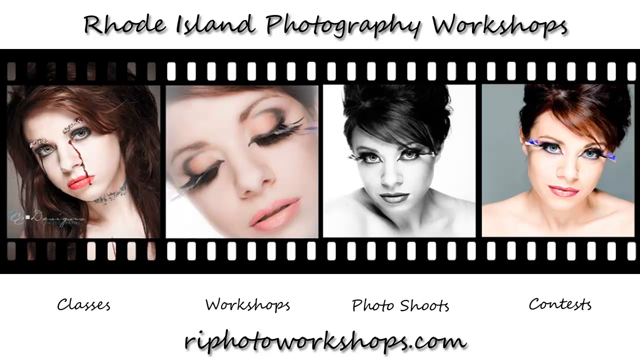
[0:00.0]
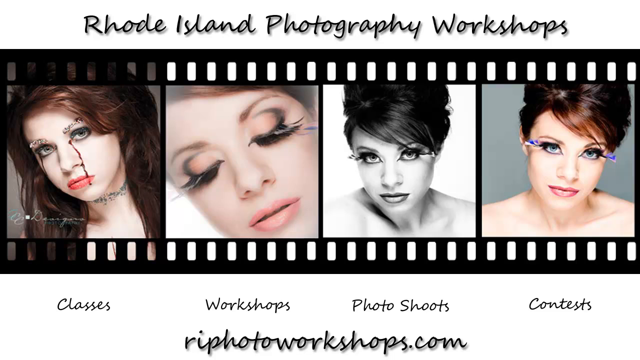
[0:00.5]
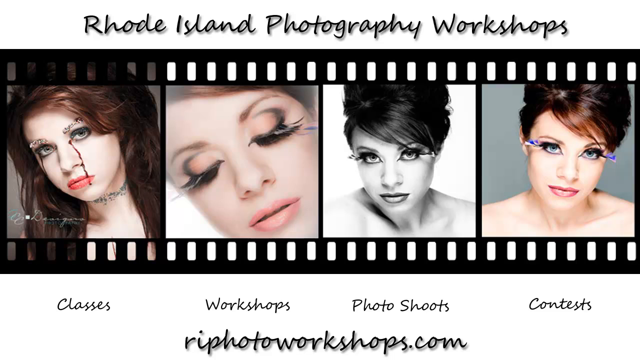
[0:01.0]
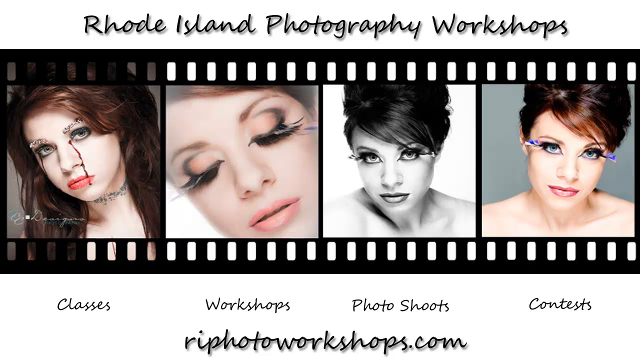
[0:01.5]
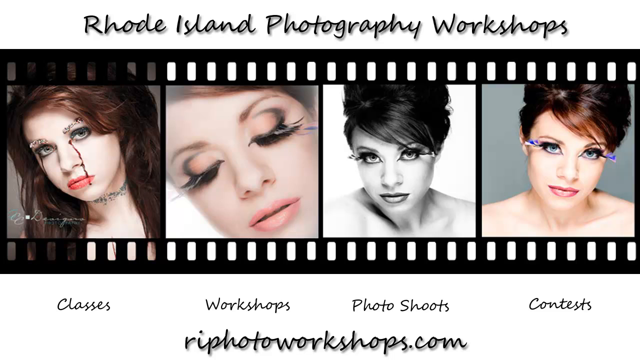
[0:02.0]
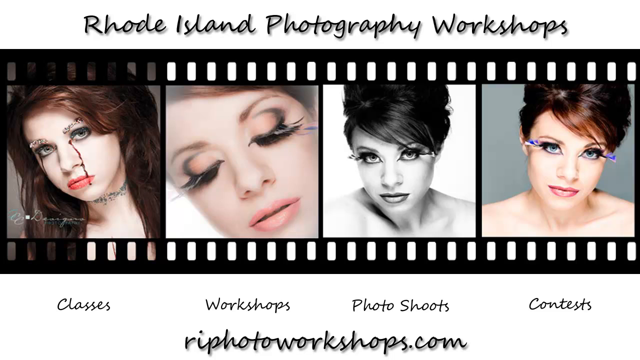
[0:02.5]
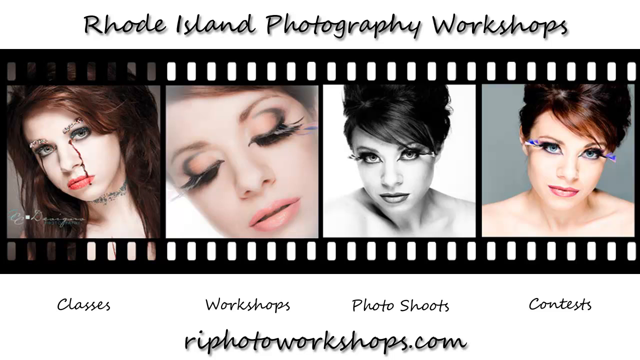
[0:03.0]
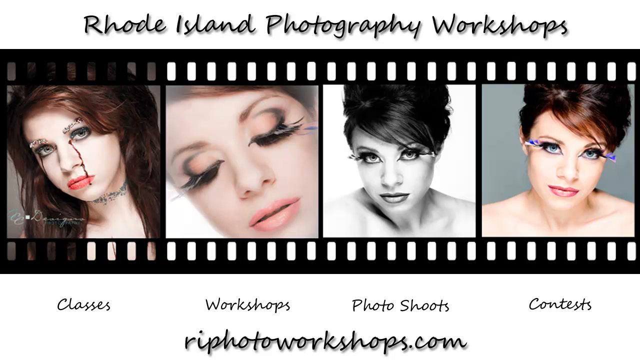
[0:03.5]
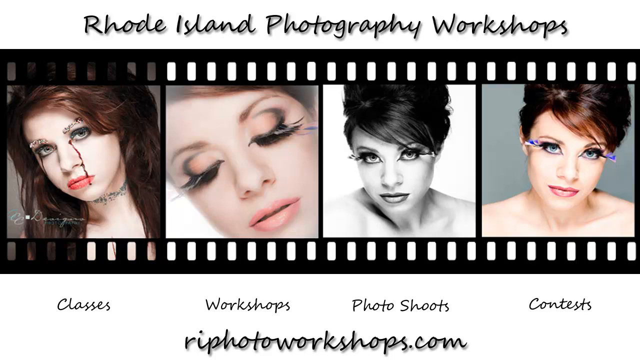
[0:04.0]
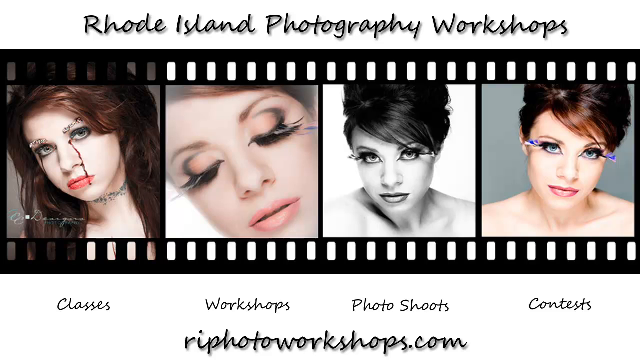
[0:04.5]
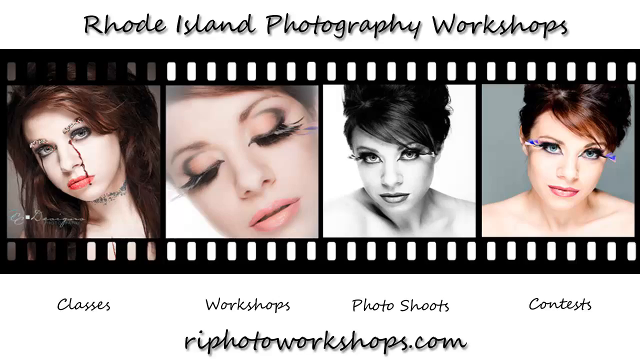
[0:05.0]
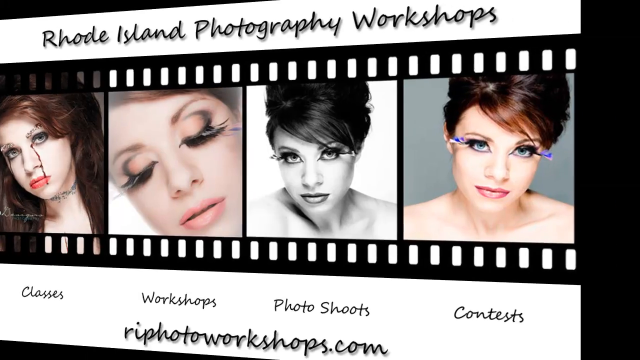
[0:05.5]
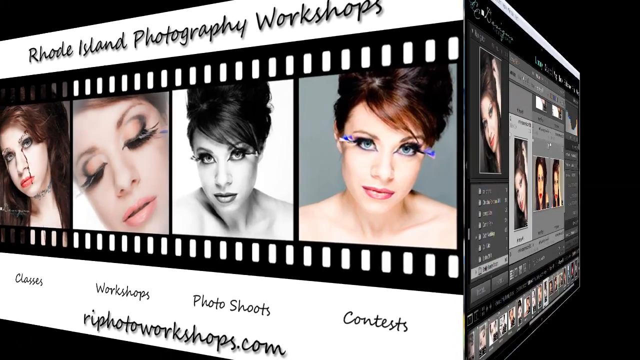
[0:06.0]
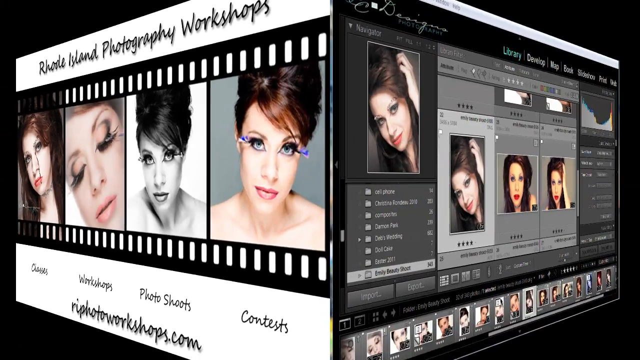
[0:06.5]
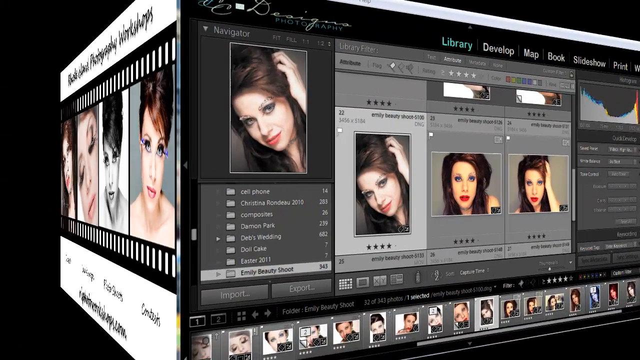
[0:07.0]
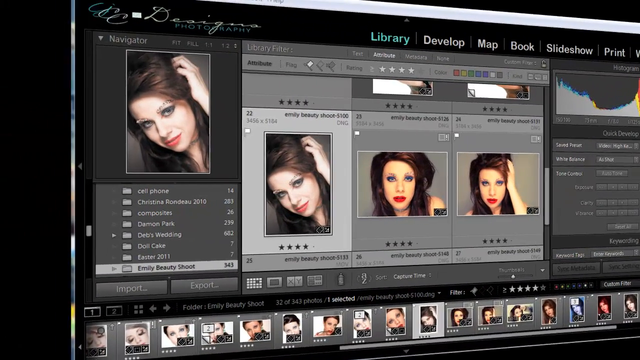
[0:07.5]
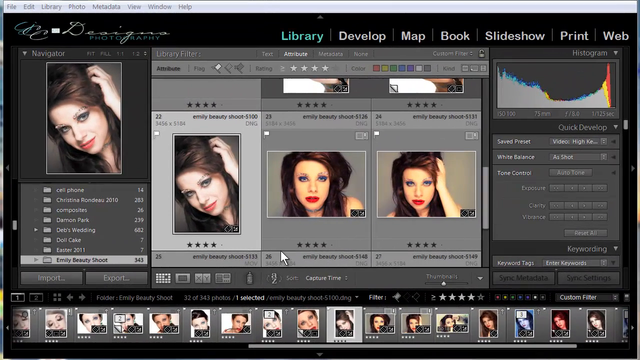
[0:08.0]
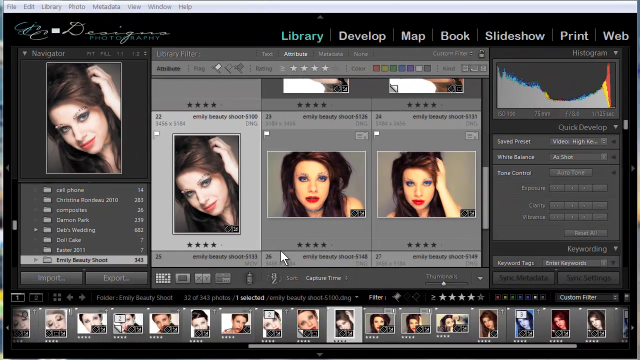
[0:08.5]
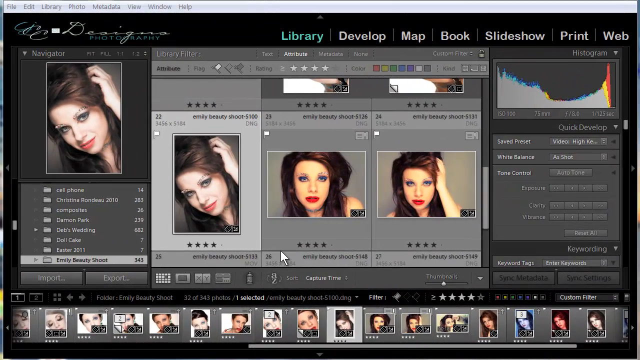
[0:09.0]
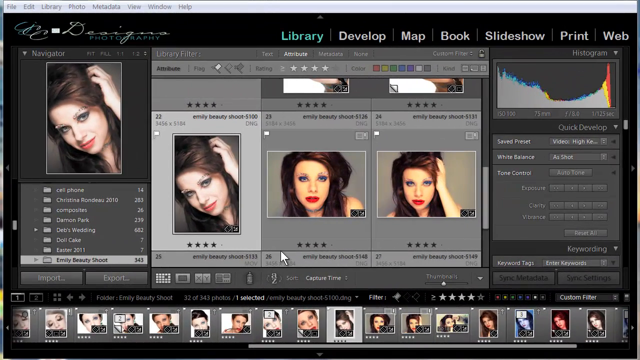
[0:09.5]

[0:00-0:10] The video opens with what appears to be an advertisement for modeling of some sort, listing classes, workshops, photo shoots and contests, with a link to a website at the bottom. A film strip runs along the top and bottom, and the text reads "Rhode Island photography workshops". In front are four pictures of women who look like models. One wears some sort of jeweled choker and some sort of jeweled lashes, with what appear to be streaks of makeup going down her face. The next has a type of lash extensions and very full lips. Another is shot in black and white in a similar style to the last. Finally, on the far right, is another headshot that mixes the previous two, with colored fake lashes and full lips. The image, set up almost like a two-dimensional picture, then rotates to reveal a photo editing software showing a number of different images of a woman, taken to look like a model. The application bar has layers, import and export, and along the top are the menus file, edit, library, photo, metadata, view, window and help.